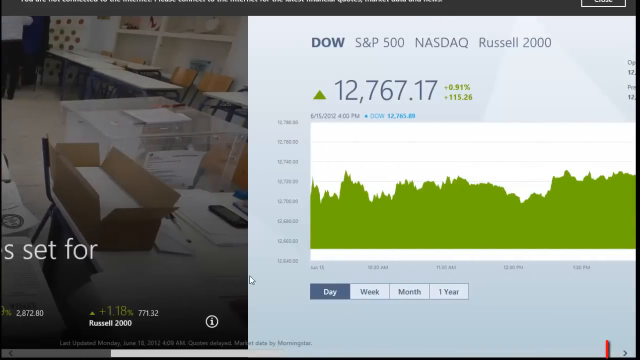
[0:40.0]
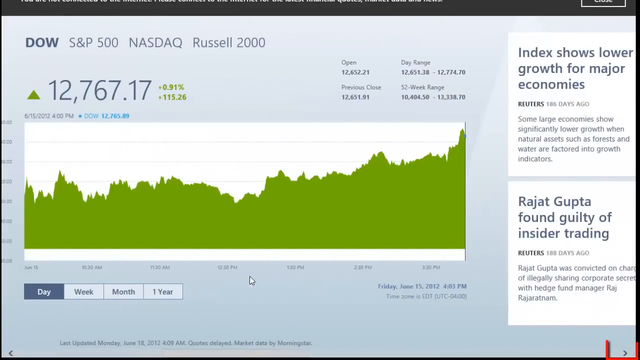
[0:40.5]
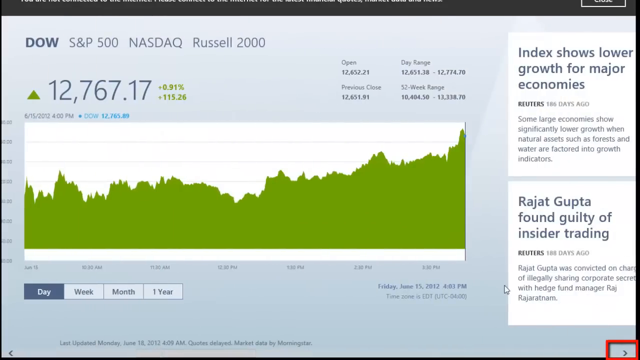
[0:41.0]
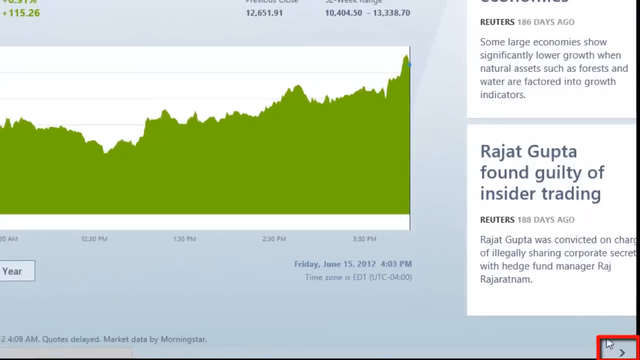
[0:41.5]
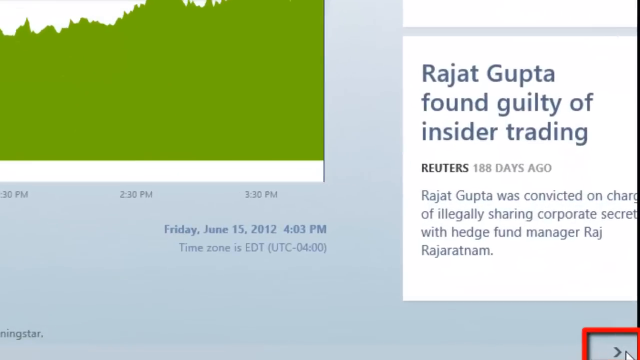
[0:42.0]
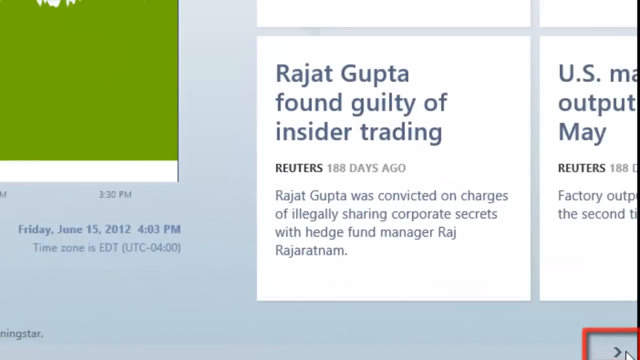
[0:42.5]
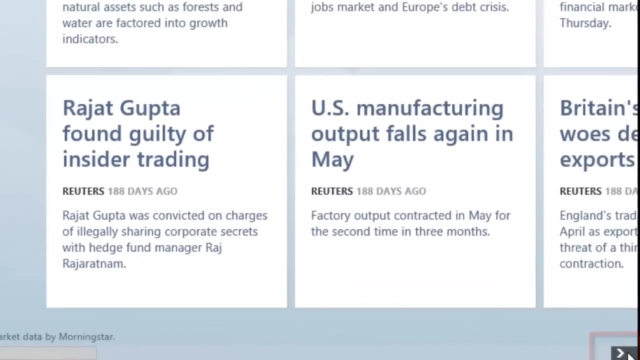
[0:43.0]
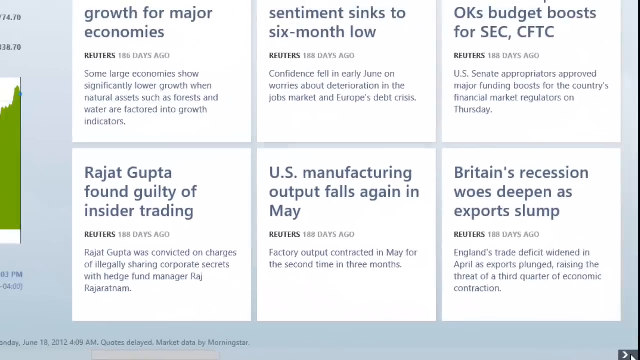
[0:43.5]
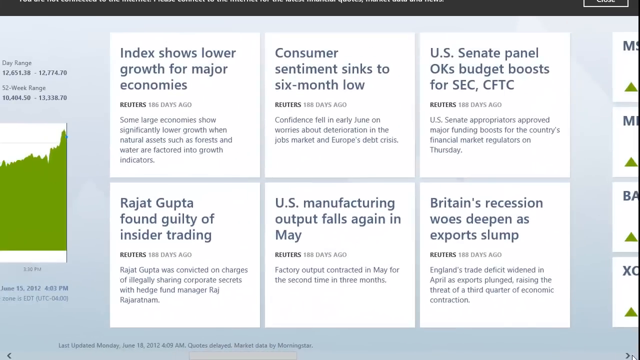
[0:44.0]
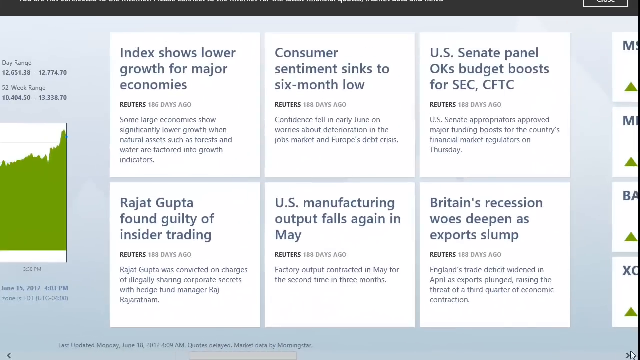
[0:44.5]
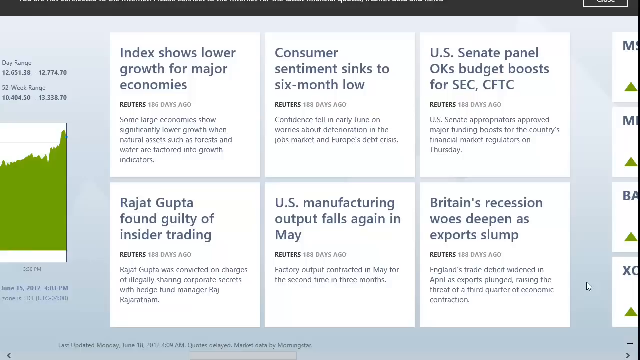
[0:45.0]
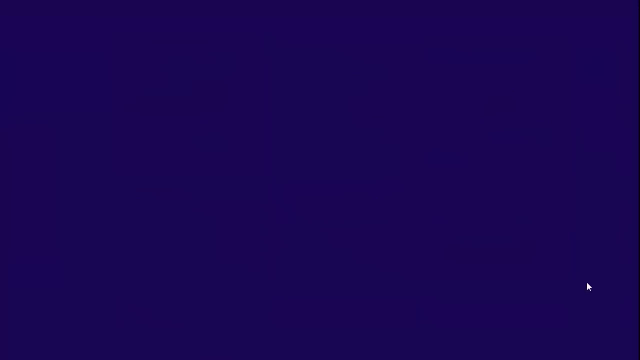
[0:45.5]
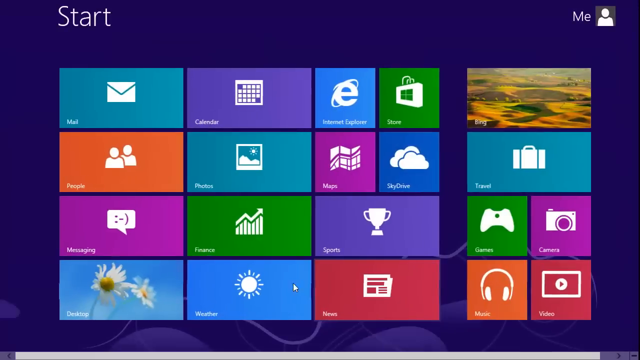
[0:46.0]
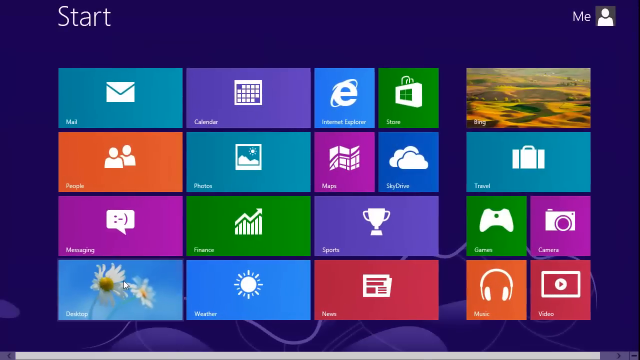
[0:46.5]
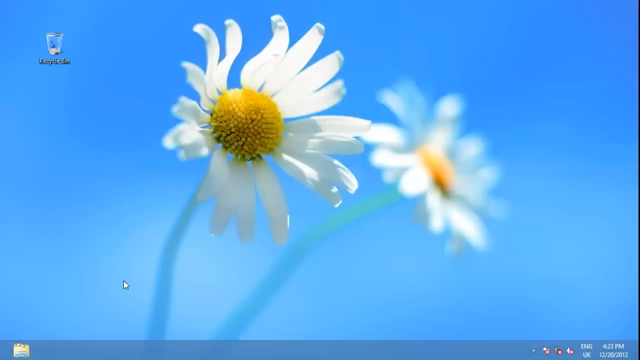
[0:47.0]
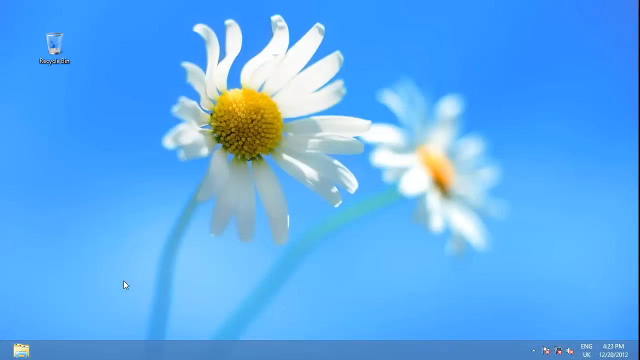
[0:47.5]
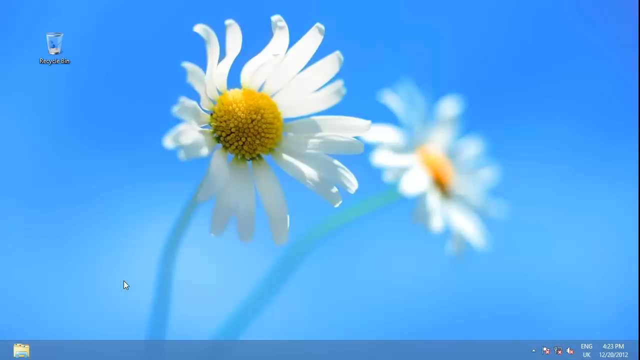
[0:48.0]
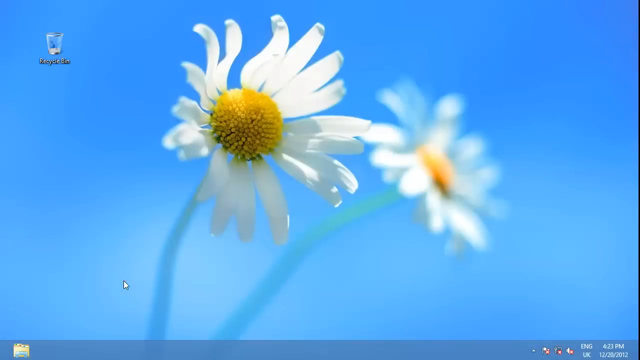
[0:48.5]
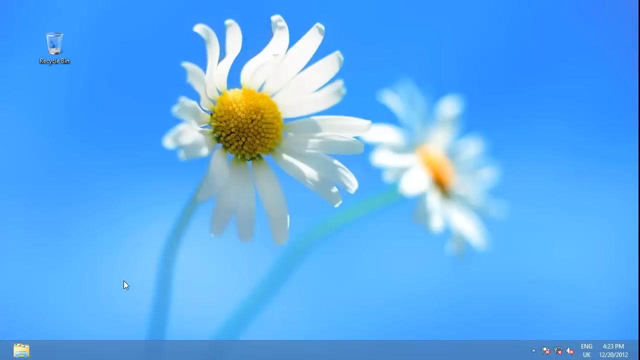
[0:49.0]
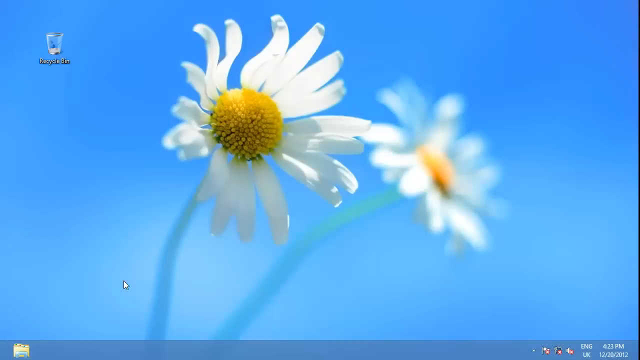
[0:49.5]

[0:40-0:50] A graph comes across the screen from right to left, showing the daily growth of the Dow Jones in green, up 0.91% on the day. The cursor moves to the right and hovers over a news article, and the camera zooms in toward the news articles. The screen adjusts to show six news articles in the center of the screen. The scene then changes back to the Windows menu screen, where the cursor moves to the left side of the screen and clicks the Desktop tab. This brings up the computer desktop, which shows a blue sky background with two flowers.